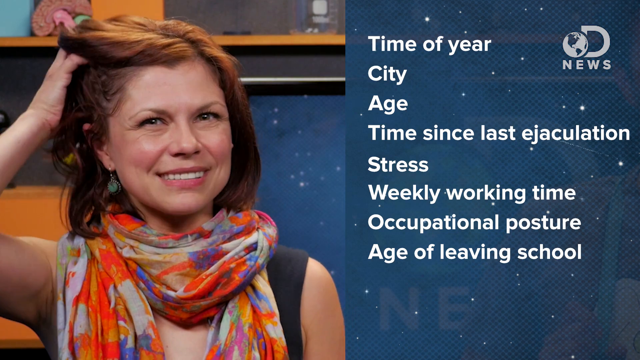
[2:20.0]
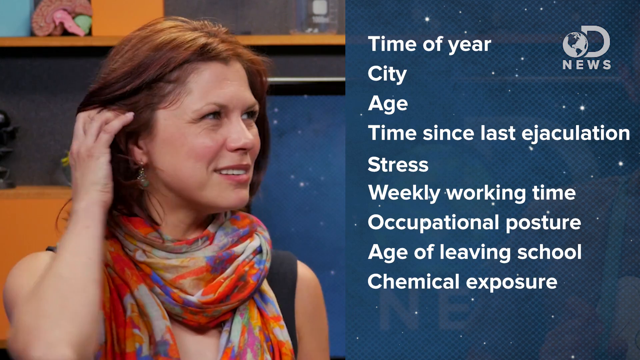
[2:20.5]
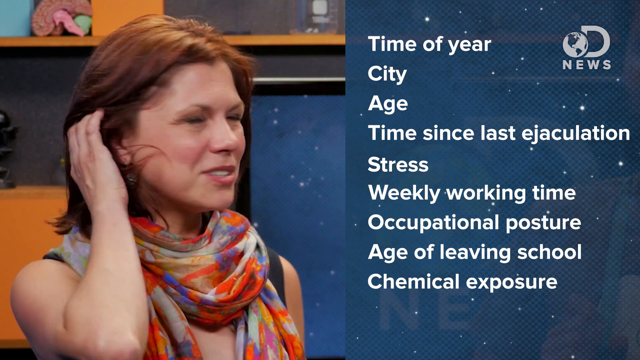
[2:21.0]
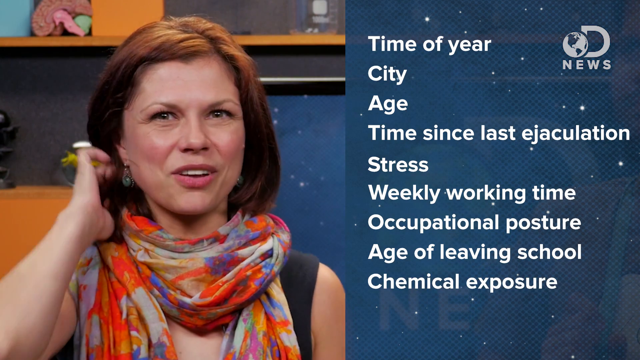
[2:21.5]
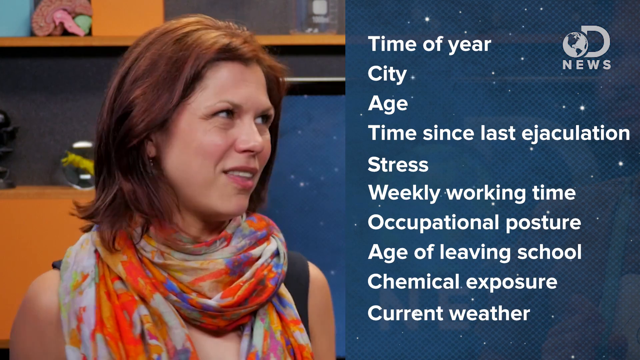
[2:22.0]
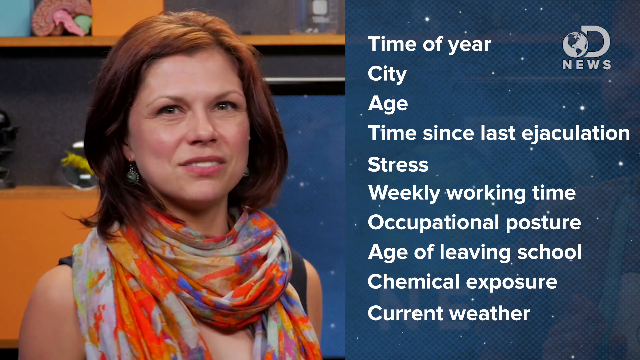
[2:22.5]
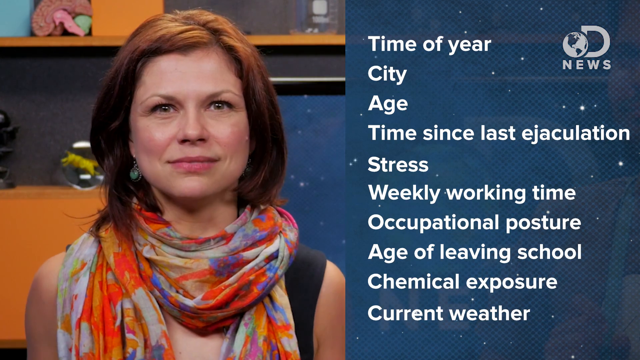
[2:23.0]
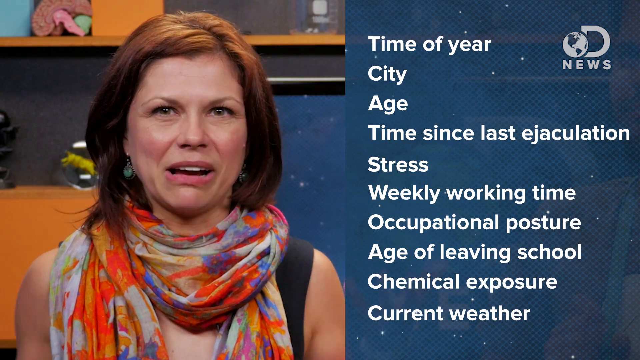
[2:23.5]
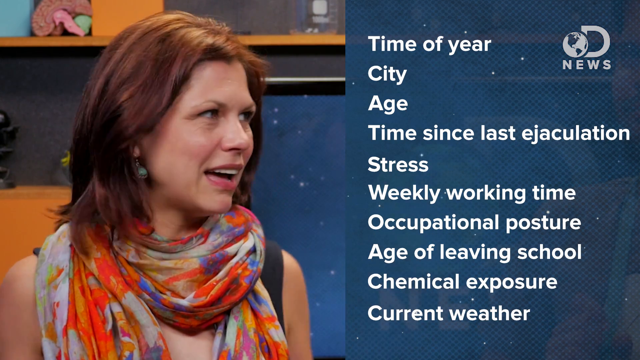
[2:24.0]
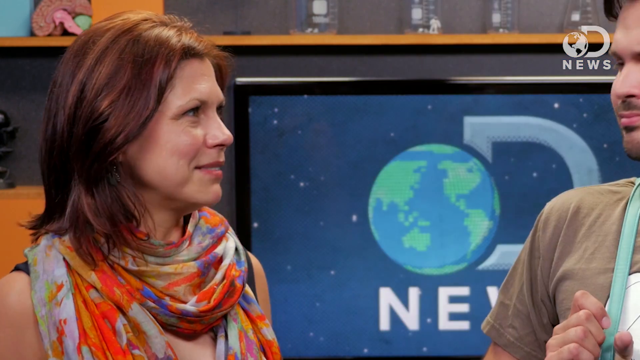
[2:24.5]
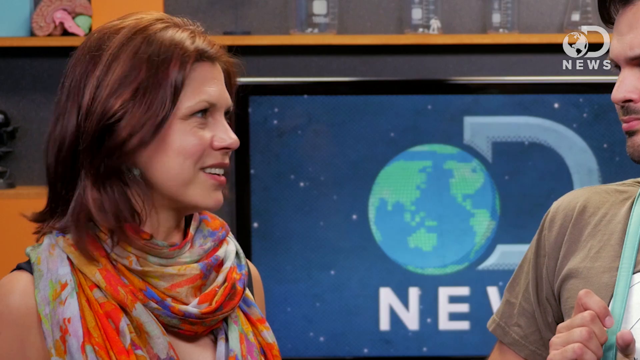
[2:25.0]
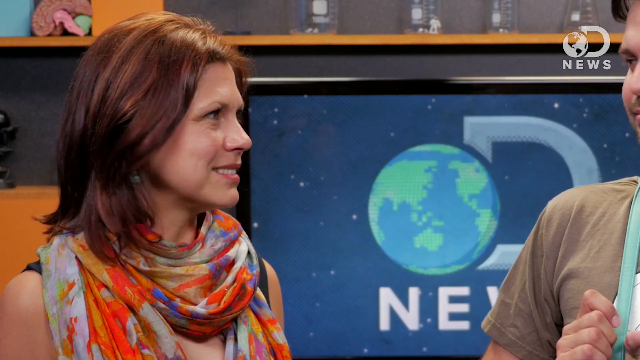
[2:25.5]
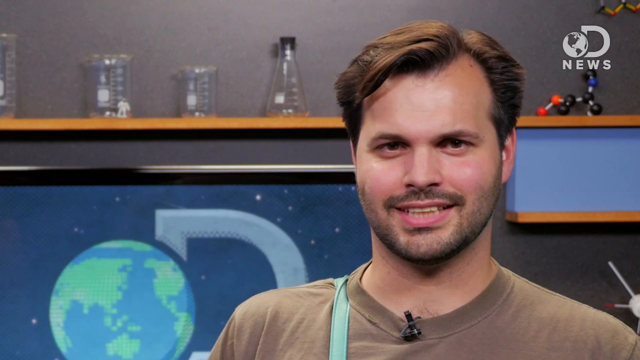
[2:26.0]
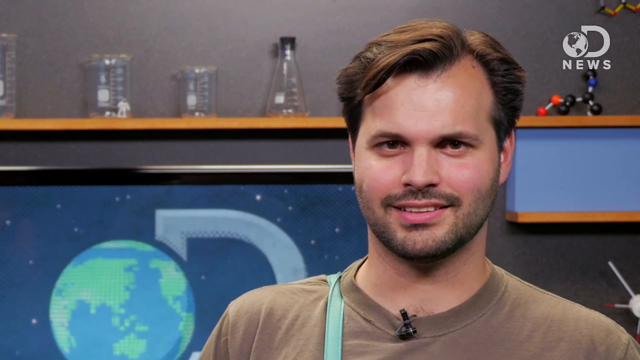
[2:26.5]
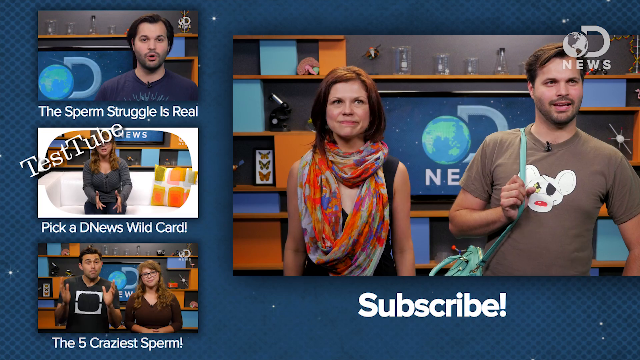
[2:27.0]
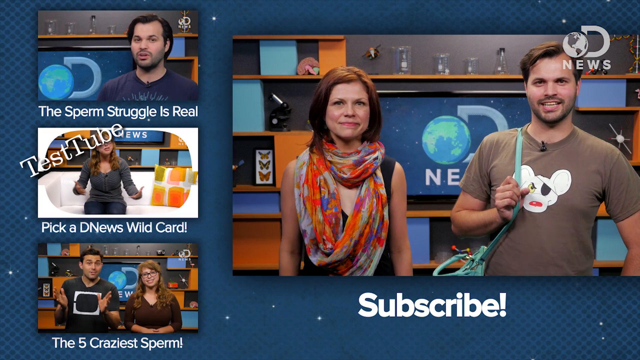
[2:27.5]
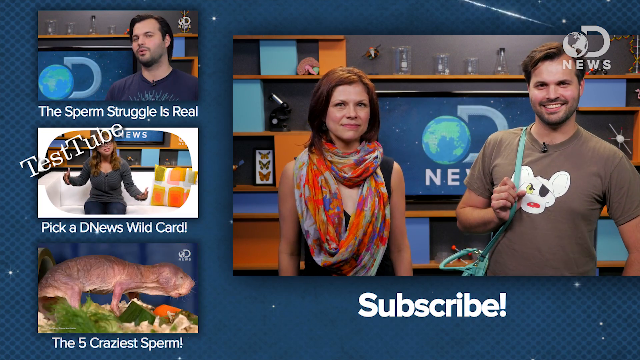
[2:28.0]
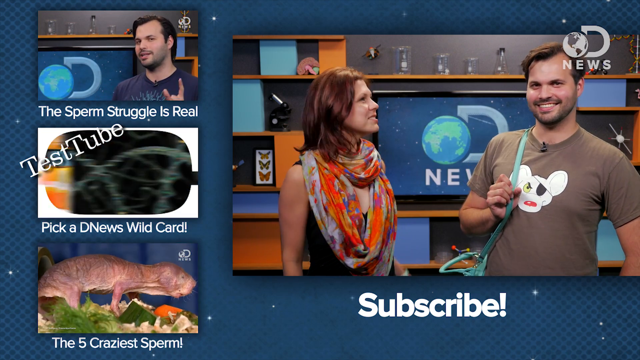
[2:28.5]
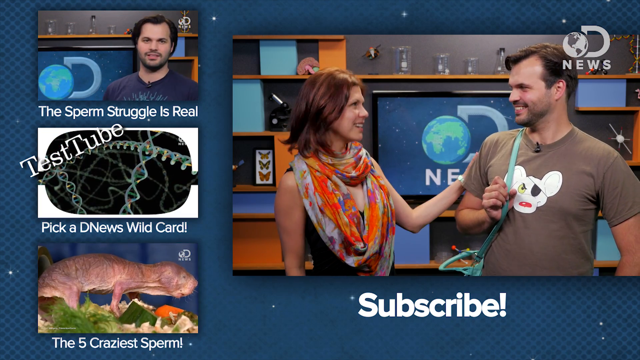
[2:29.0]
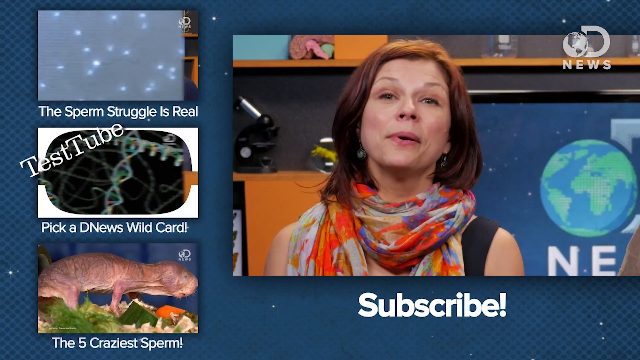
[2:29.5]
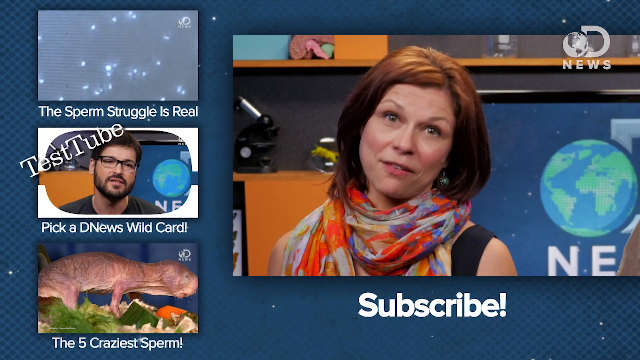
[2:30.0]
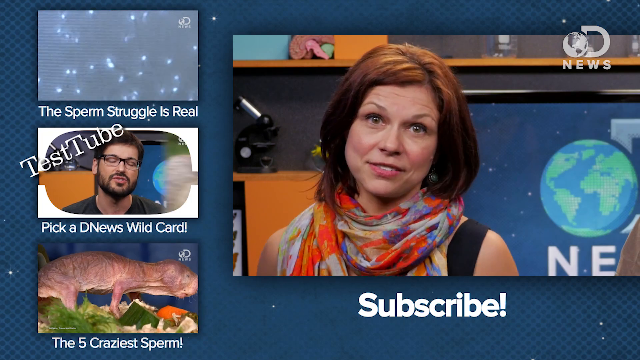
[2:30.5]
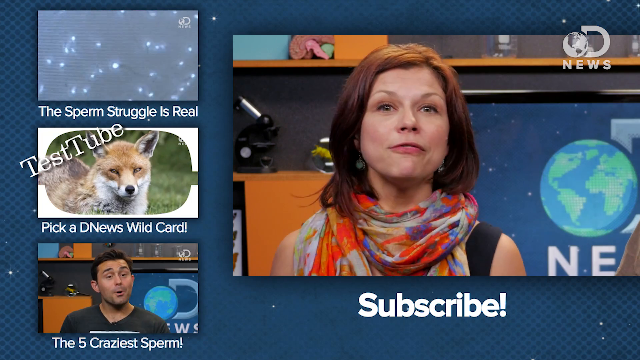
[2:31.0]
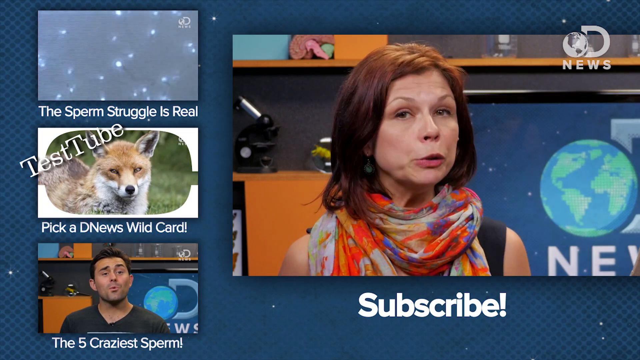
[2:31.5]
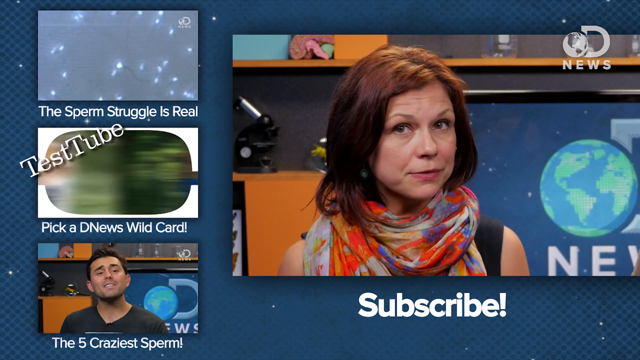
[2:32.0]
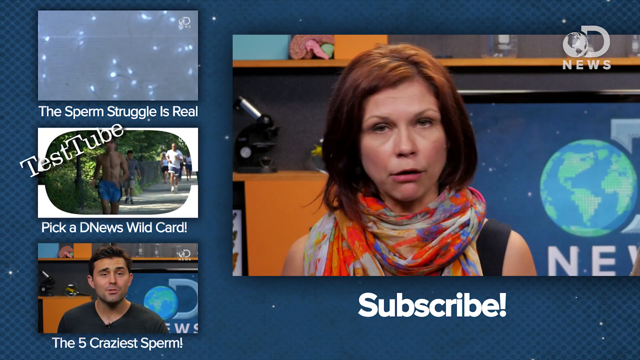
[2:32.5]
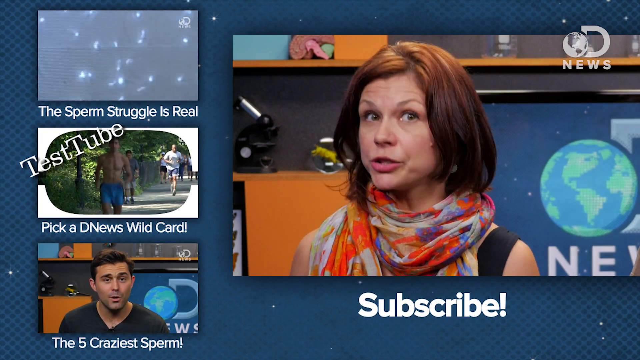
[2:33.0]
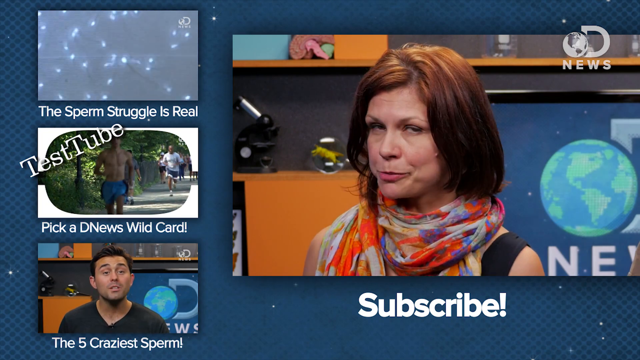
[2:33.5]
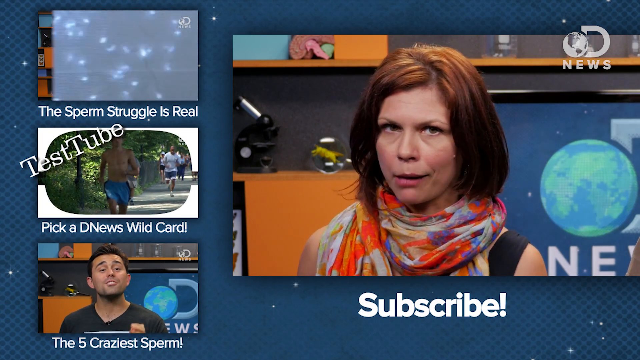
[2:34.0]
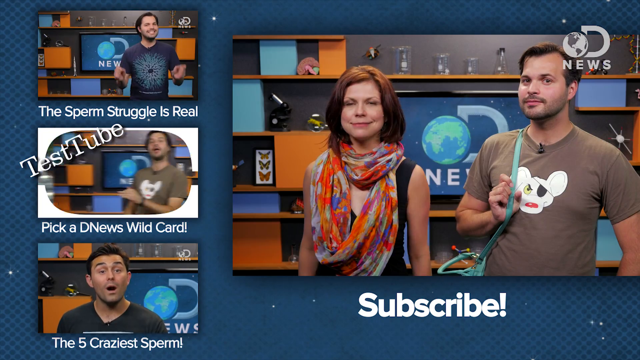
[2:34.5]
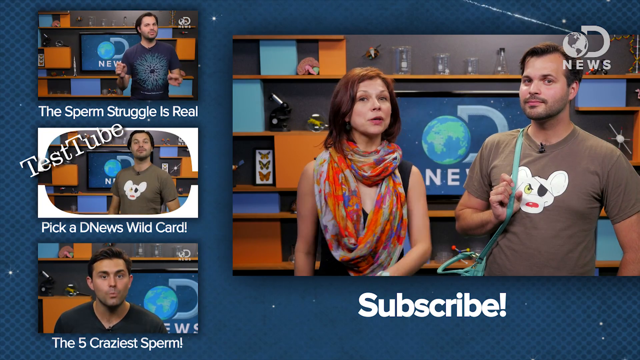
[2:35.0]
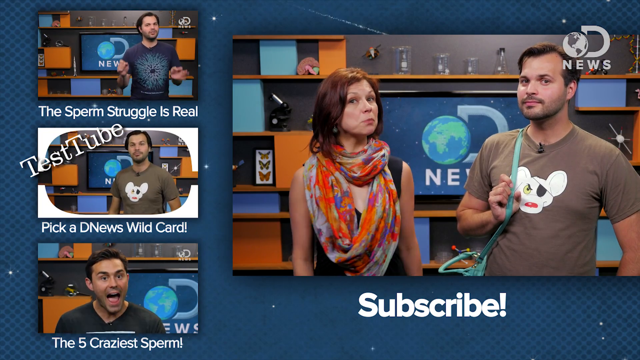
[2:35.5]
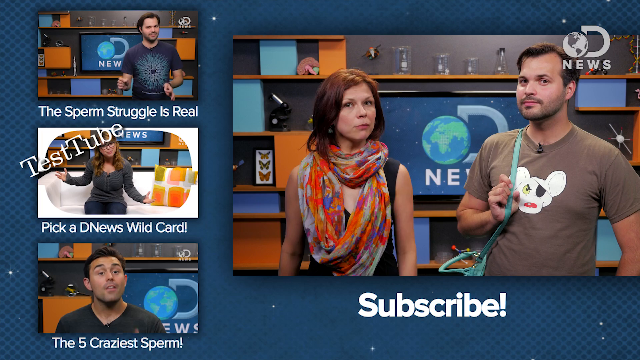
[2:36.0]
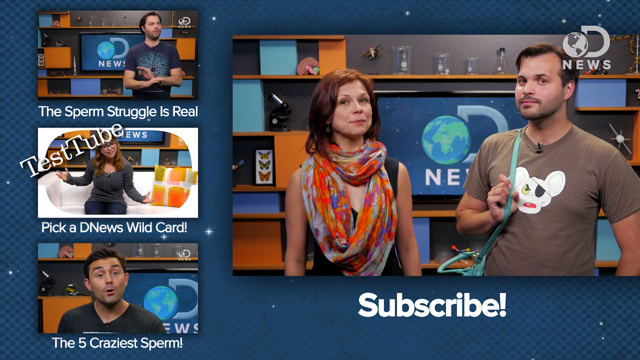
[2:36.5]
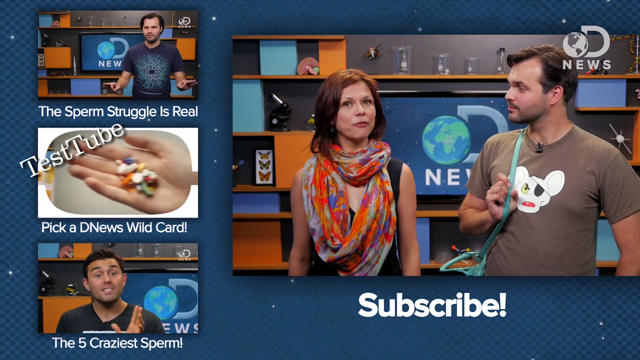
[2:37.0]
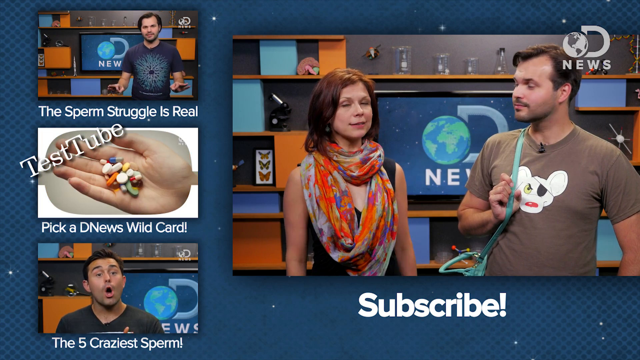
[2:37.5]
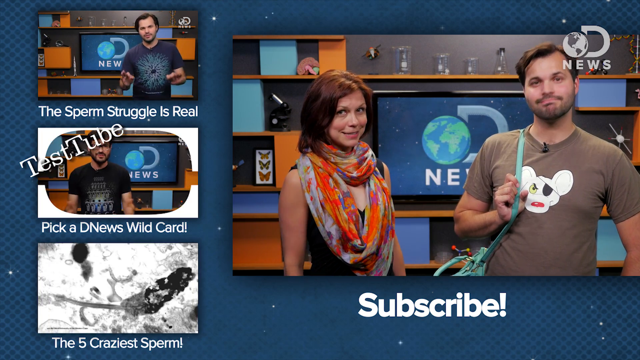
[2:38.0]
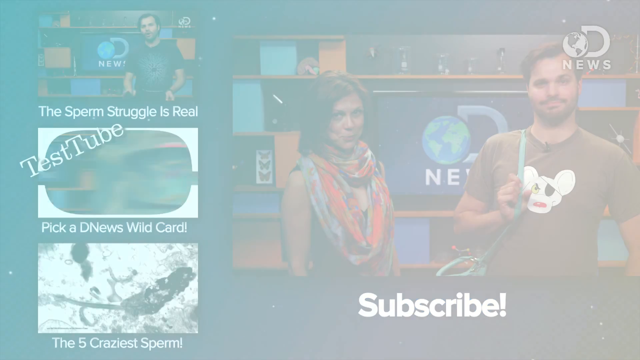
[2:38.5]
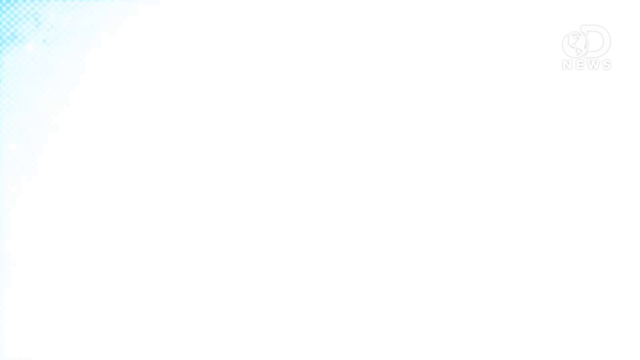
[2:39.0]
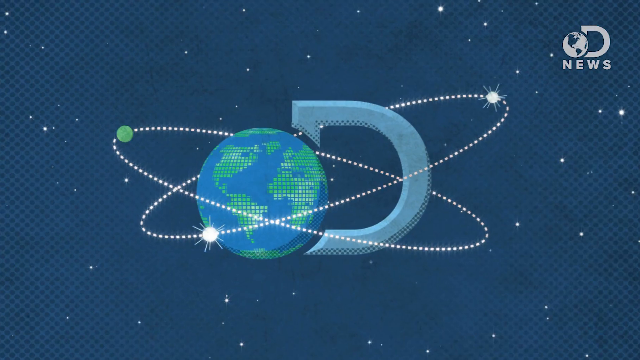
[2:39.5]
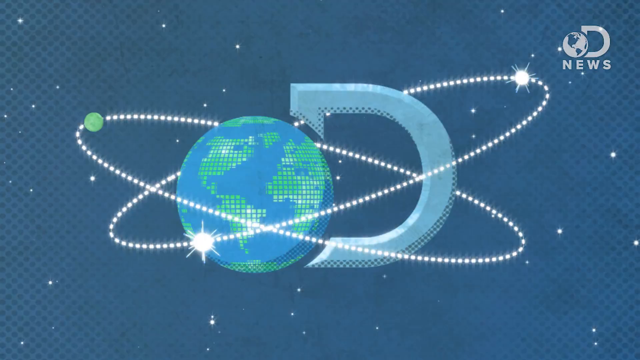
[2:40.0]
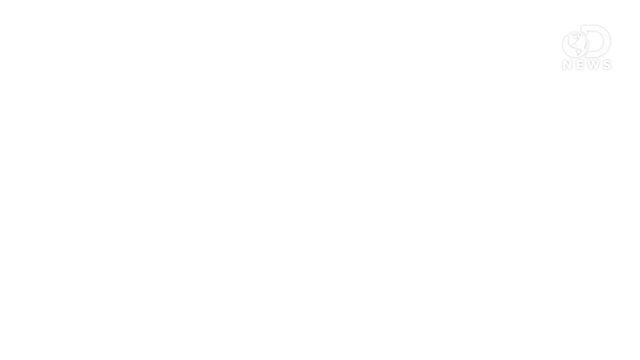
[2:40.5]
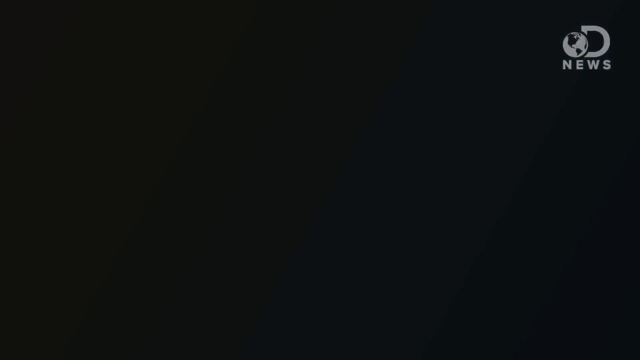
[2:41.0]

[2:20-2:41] The graphic remains to the right side of Caren, saying "time of year, city, age, time since last ejaculation, stress, weekly working time, occupational posture, age of leaving school." She has reddish brown hair, and her scarf has different colors of red and white with a little blue and a little green, like tie-dye or paint. She wears a sleeveless black shirt, almost tank-top-like. She runs her hands through her hair. The focus shifts a little to the man next to her, who wears a kind of brownish shirt with a white mouse on the front that has an eye patch and red nose. Then a graphic shows three videos of people on the left side: one shows sperm, "struggle is real," with a man talking; one shows a test tube and a woman on screen talking; and one, "DNews wildcard," shows two other people talking, one with glasses. They are all filmed in the same room, with the DNews logo graphic on a monitor, the science flask in the background, the microscope and the model brain. It says "Subscribe," and the left side shows different video movements: animals, people walking, running and jogging, and different people reporting. It then fades to an ending animation of the Earth, the DNews logo and stars, all in different shades of blue.